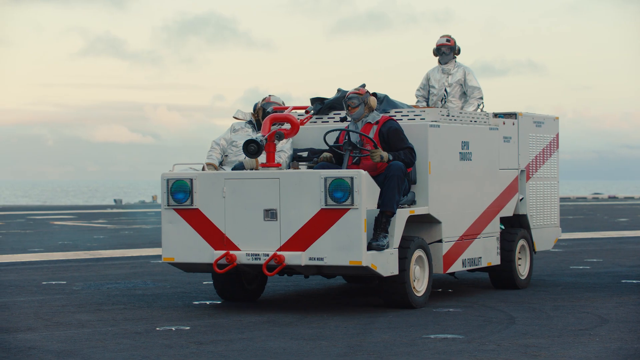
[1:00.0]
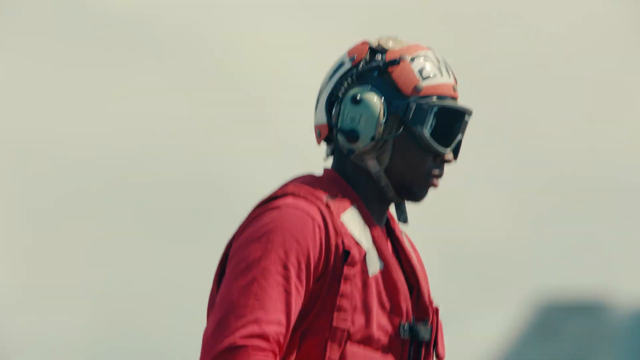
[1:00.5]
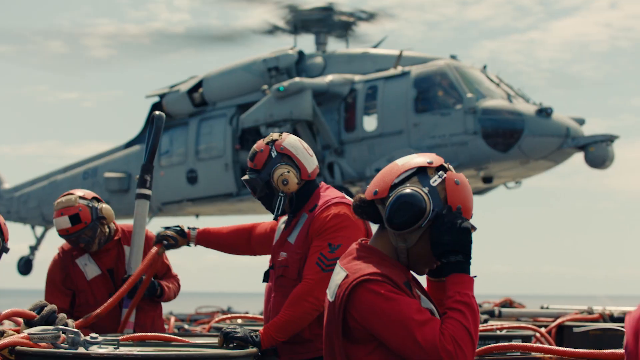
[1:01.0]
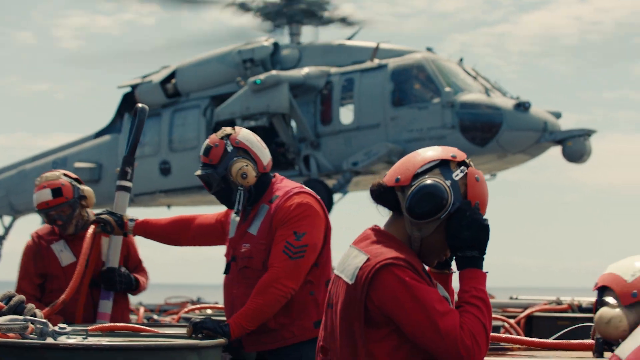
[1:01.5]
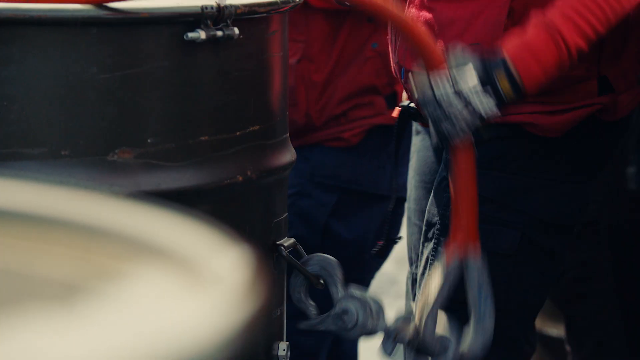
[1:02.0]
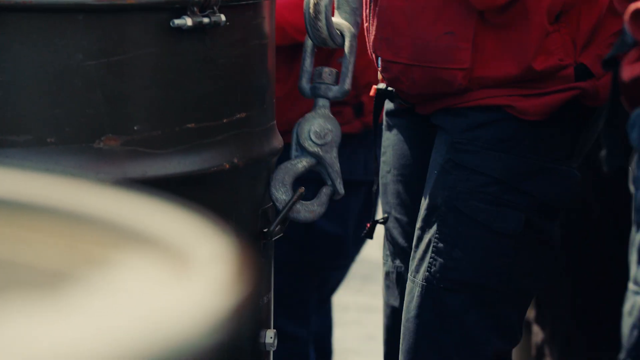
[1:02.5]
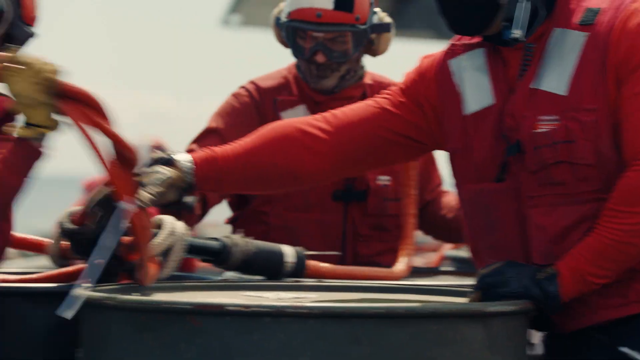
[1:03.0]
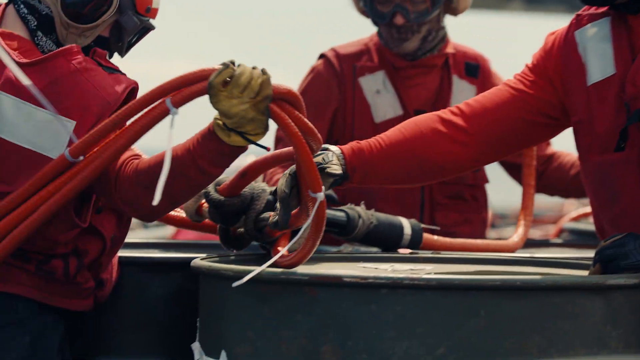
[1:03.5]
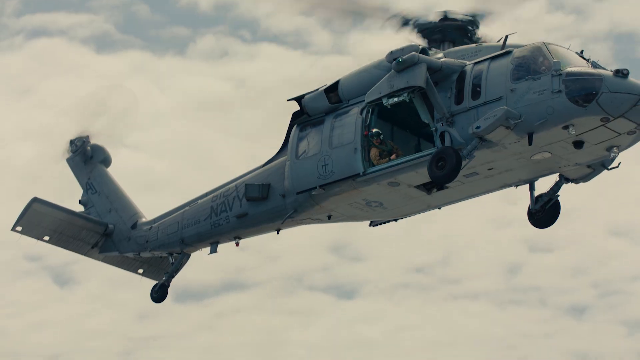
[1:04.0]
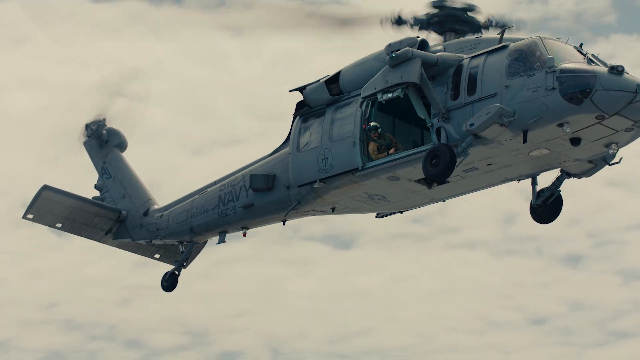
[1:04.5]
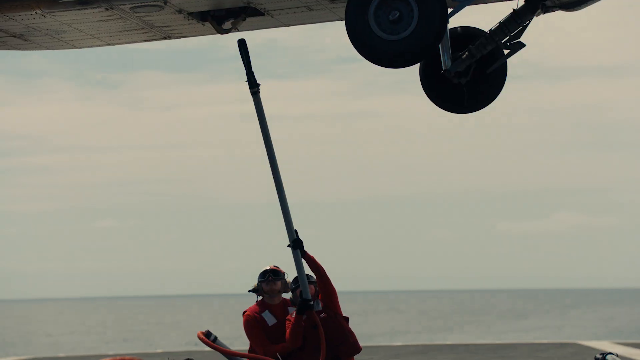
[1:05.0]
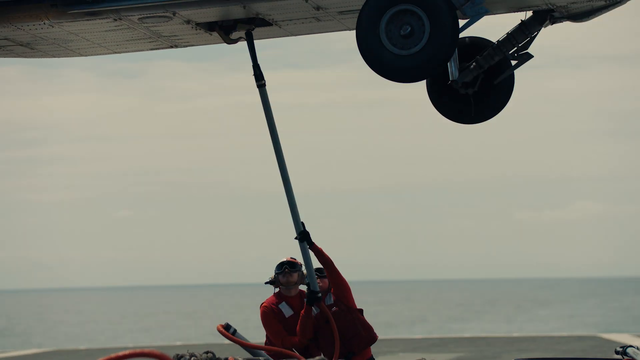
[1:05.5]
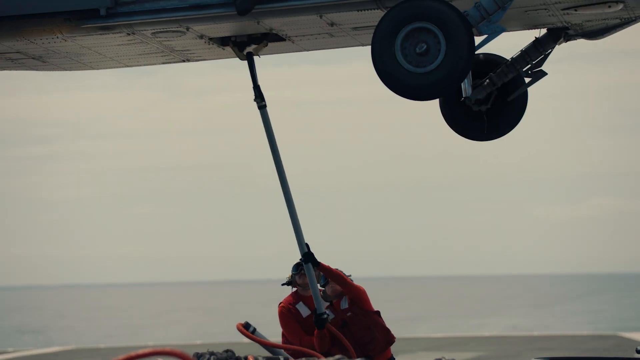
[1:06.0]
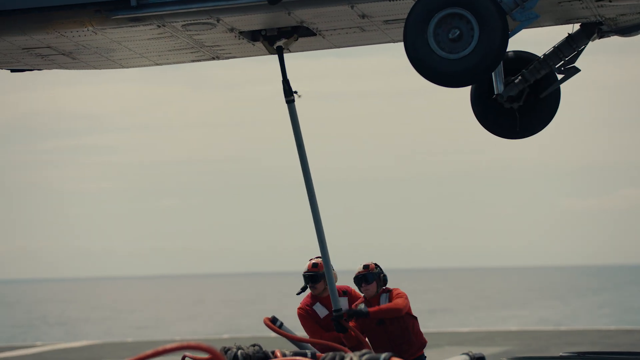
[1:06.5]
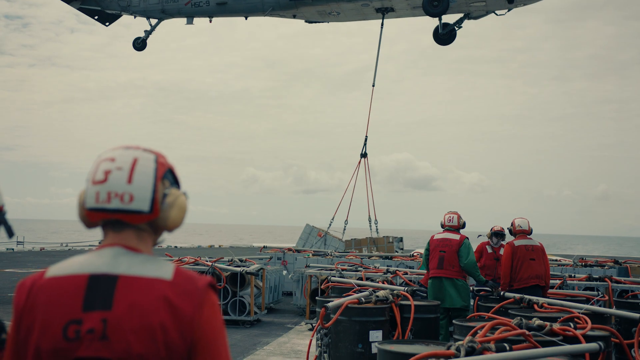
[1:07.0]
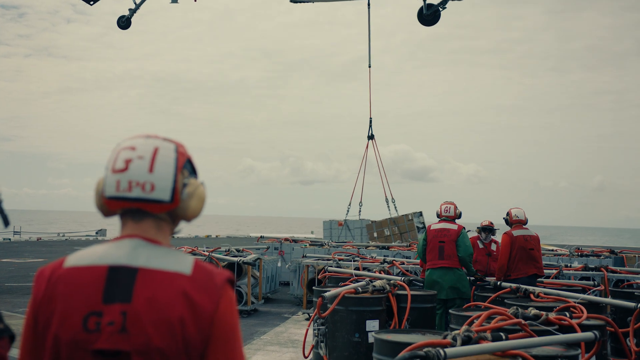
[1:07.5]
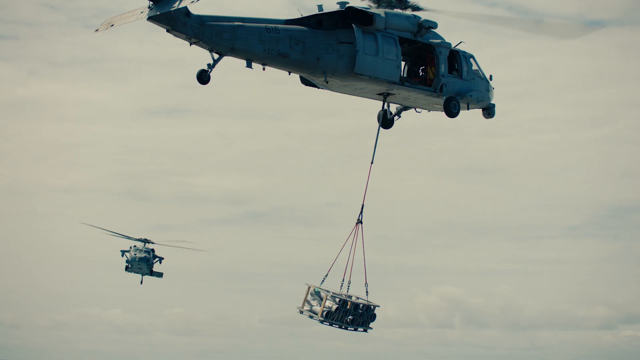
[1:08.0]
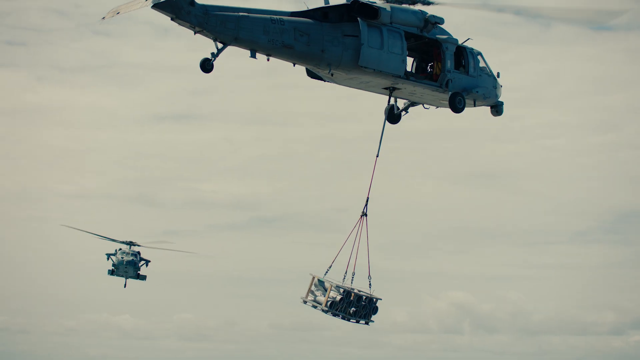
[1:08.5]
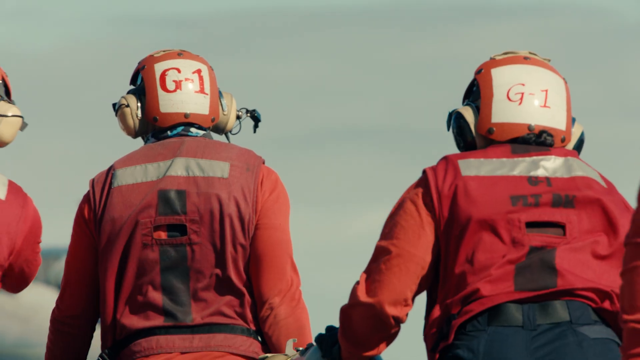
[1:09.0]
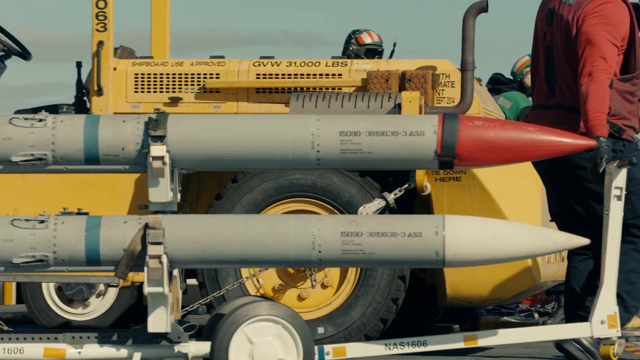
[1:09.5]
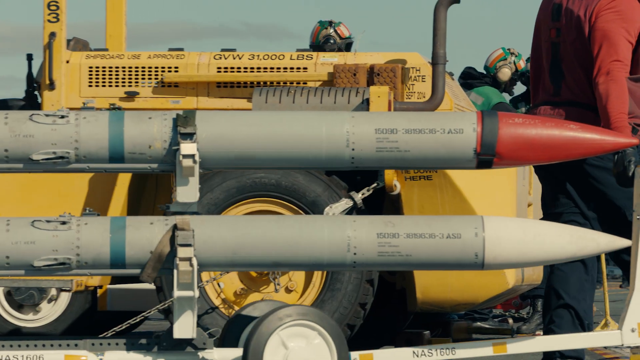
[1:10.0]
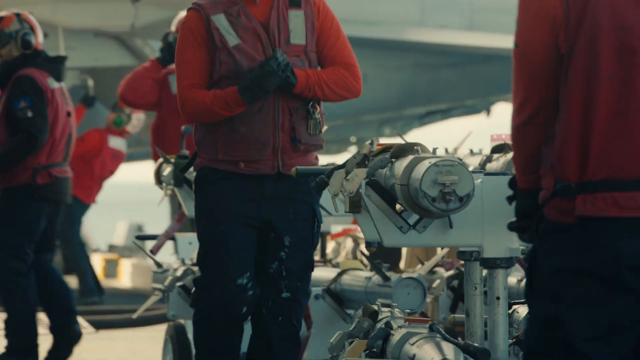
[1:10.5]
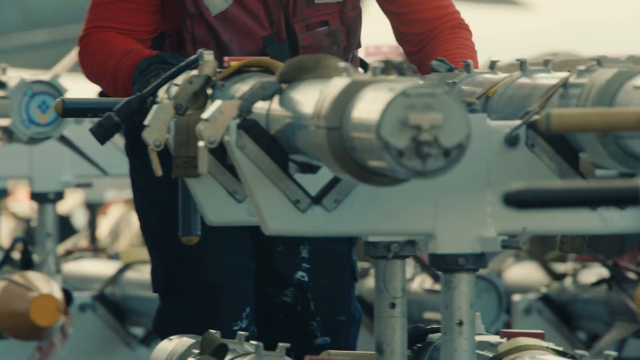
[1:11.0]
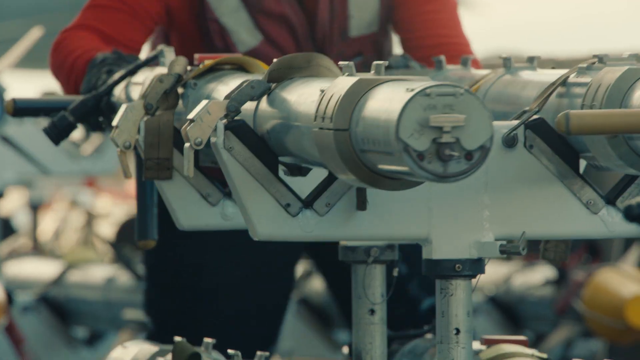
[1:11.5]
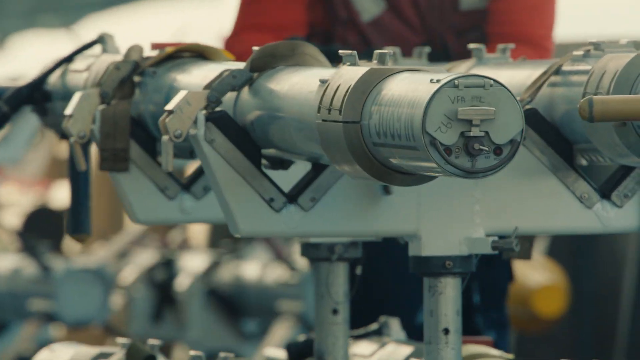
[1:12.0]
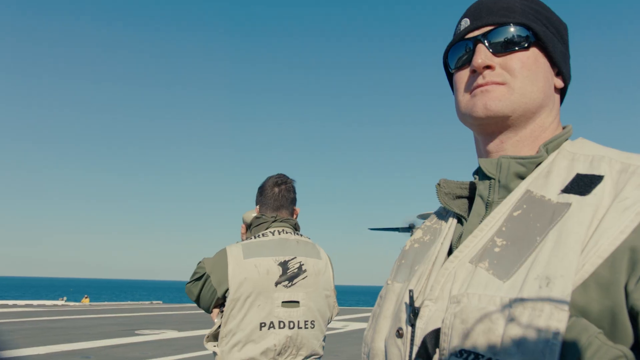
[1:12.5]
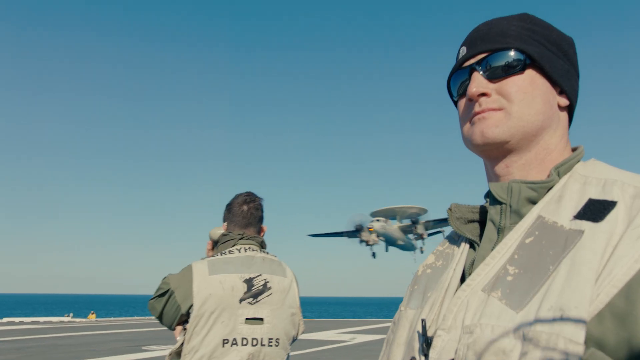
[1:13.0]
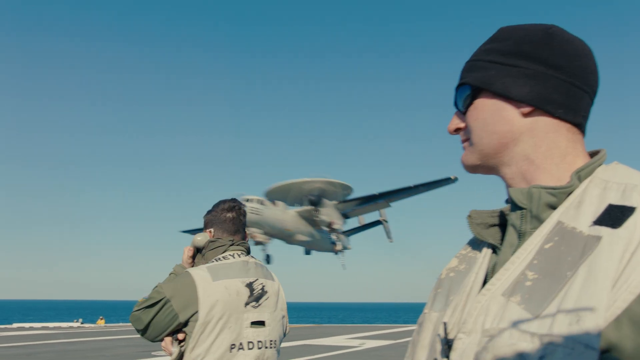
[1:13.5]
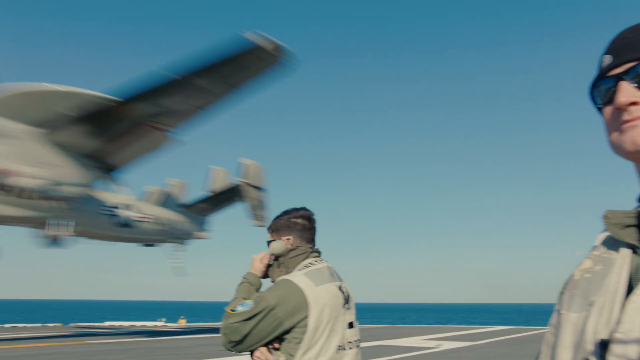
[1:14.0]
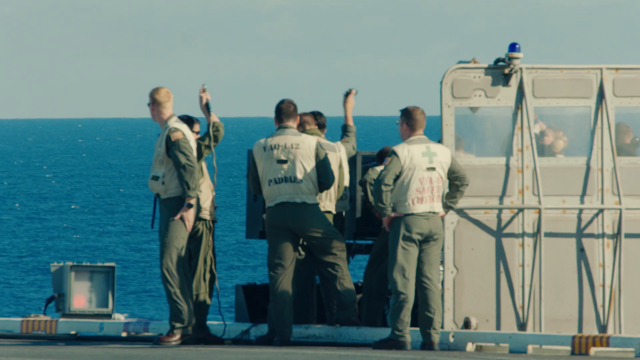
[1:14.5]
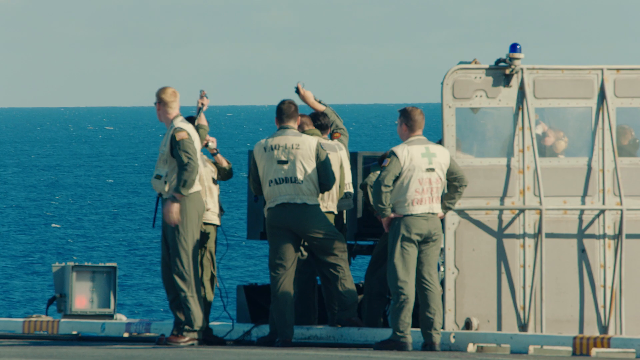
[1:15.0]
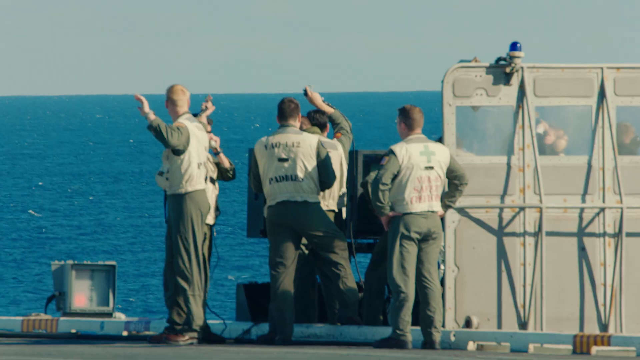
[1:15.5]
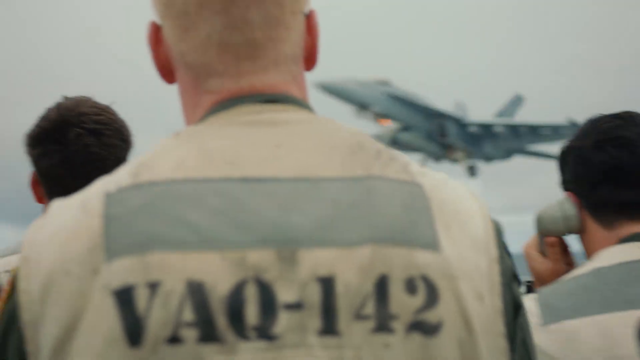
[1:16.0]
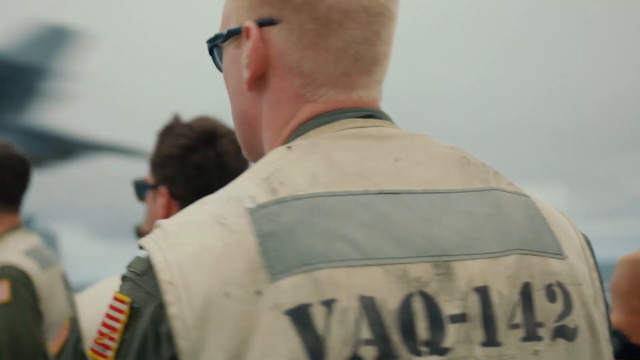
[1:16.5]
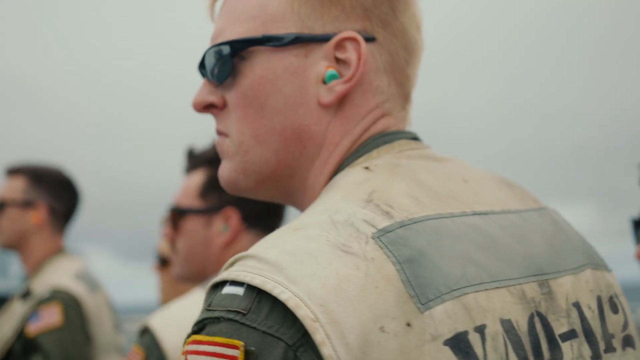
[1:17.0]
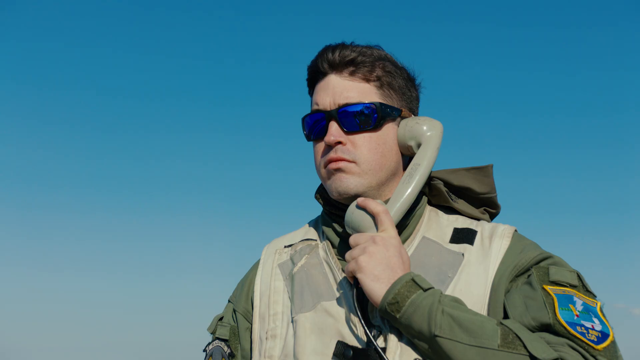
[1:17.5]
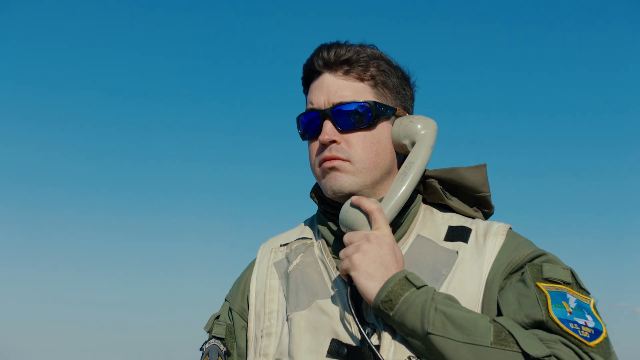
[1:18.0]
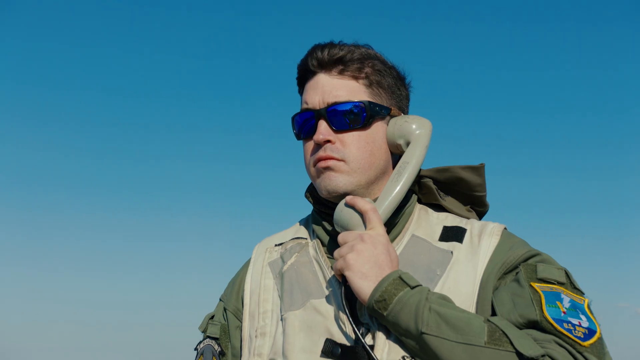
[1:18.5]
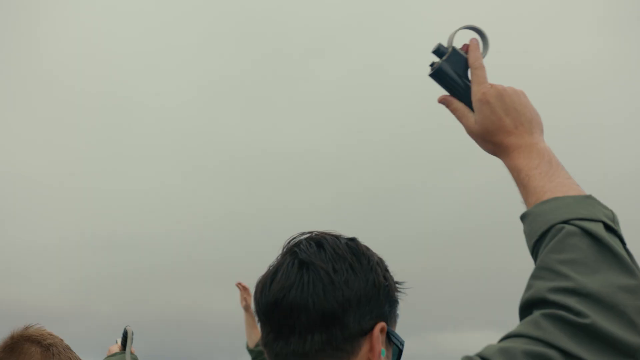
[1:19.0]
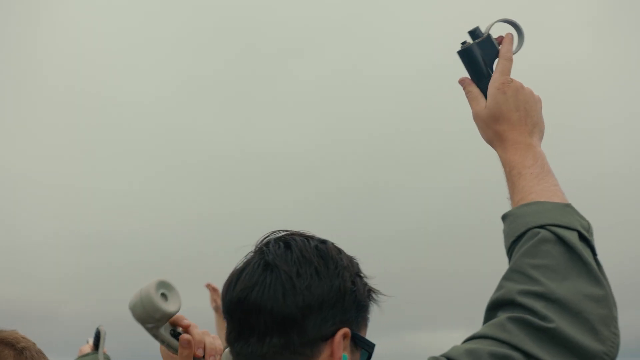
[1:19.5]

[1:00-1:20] Someone in red walks across the tarmac, and then a group is shown rigging some kind of barrel, probably fuel. A helicopter hovers over the deck, and it looks like the crew is attaching the barrels to be carried by the helicopter; they dangle straight down. A quick view shows the backs of the controllers' heads, followed by a close-up of what looks like some kind of missiles and a brief view of a contraption with a couple of metallic tubes. A couple of men in the same khaki and olive uniforms stand as a plane comes down behind them and lands on the tarmac. Another group of similarly uniformed people are kind of pointing and chatting, and a close-up shows another plane landing; everyone watches the plane as it goes out of view toward the left. A close-up shows another of these men holding a beige phone to his ear with his right hand, then a person's hand going up into the air, followed by a view from behind the man's head.